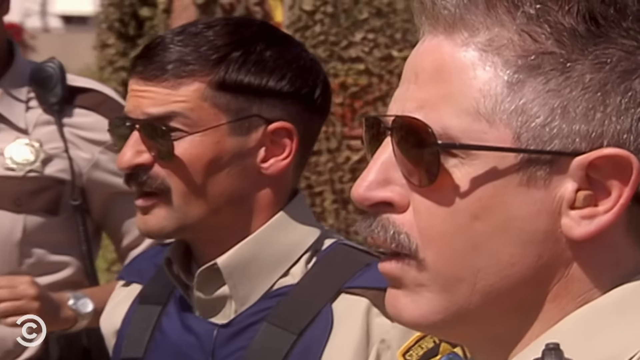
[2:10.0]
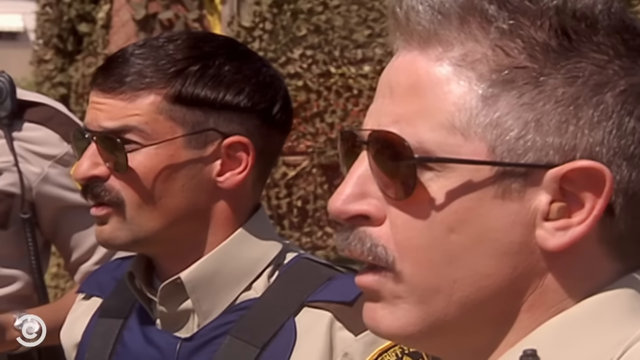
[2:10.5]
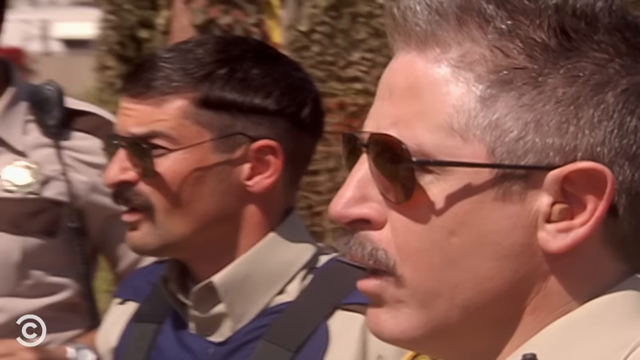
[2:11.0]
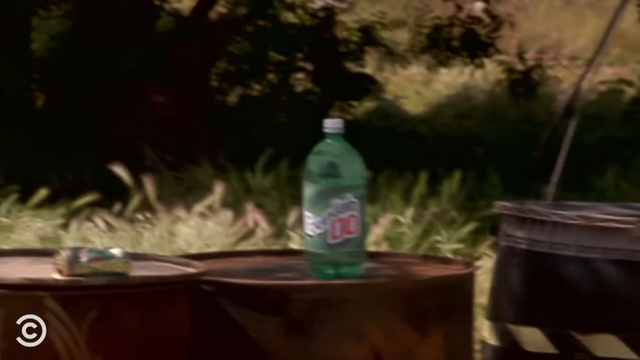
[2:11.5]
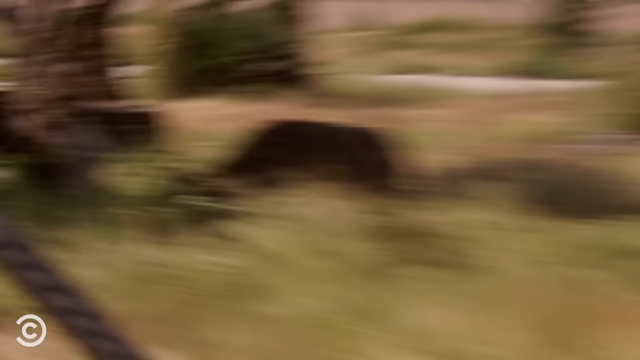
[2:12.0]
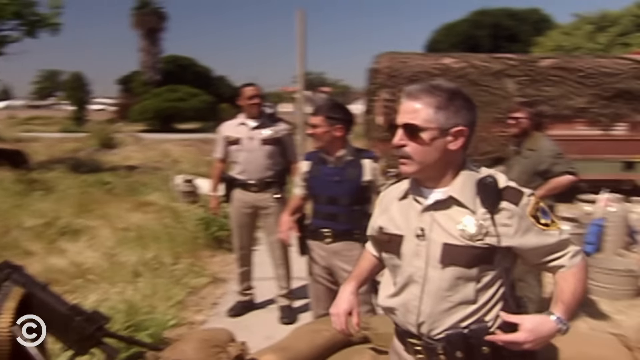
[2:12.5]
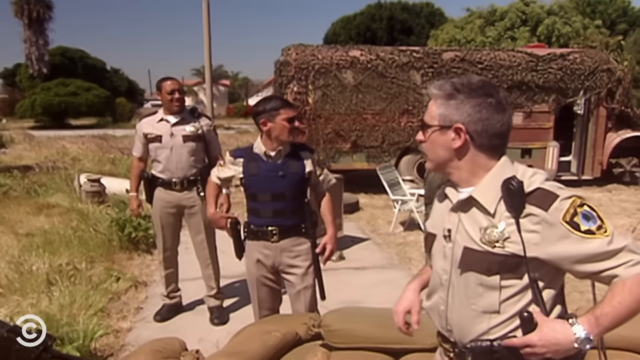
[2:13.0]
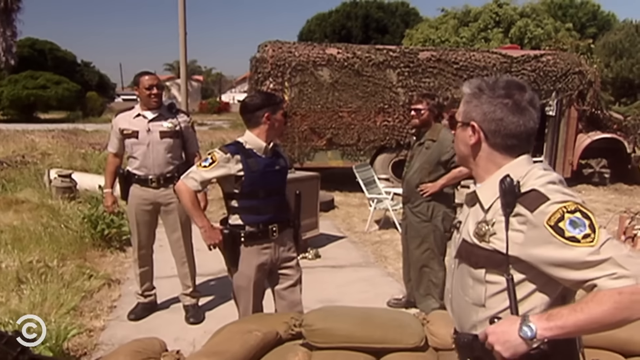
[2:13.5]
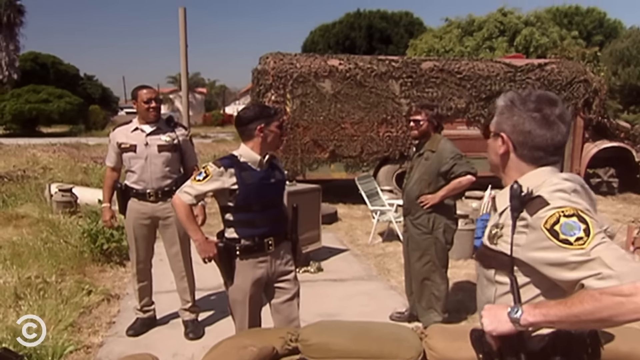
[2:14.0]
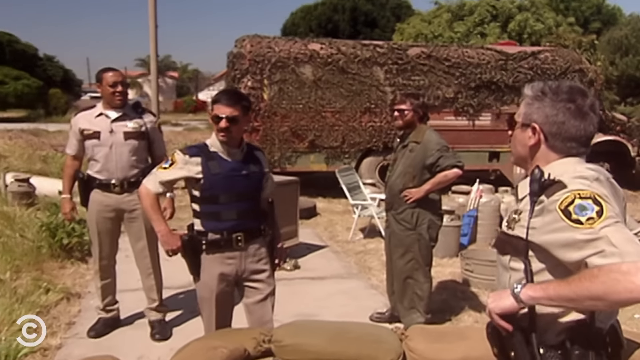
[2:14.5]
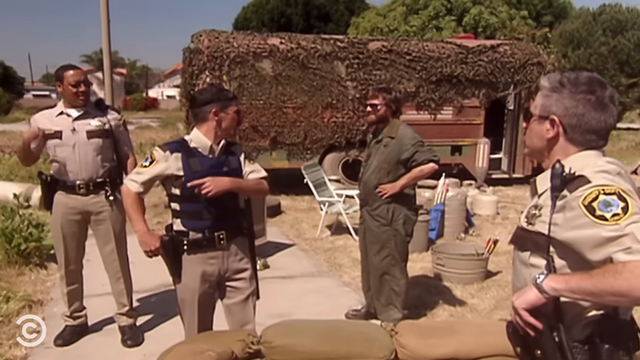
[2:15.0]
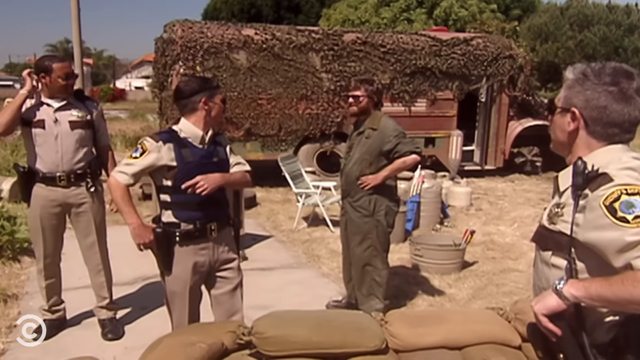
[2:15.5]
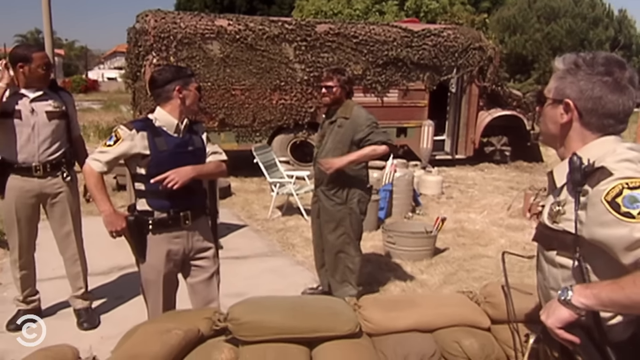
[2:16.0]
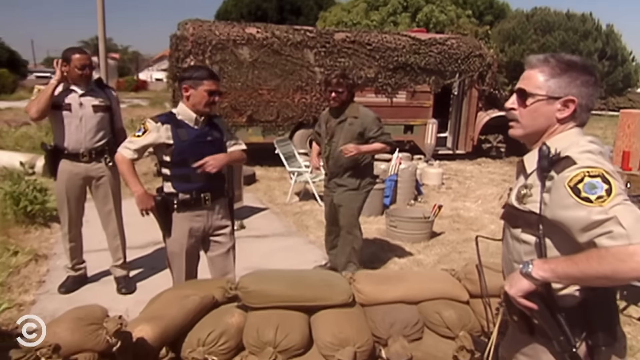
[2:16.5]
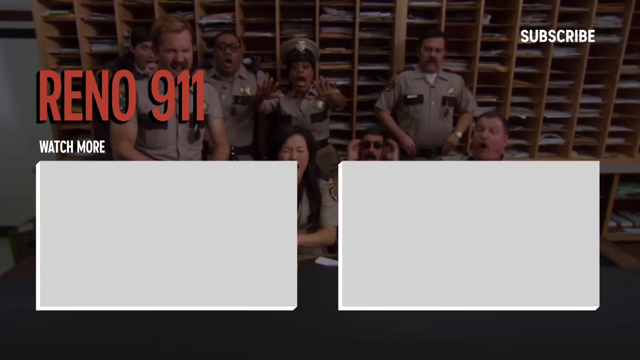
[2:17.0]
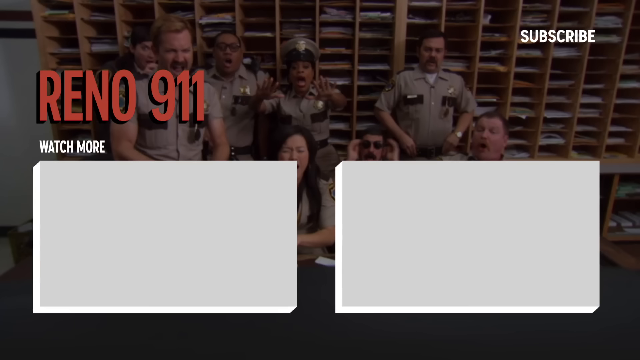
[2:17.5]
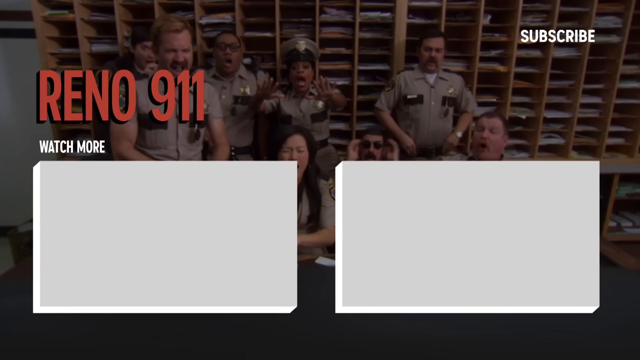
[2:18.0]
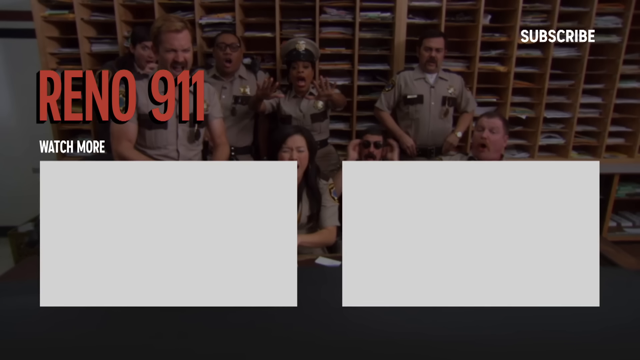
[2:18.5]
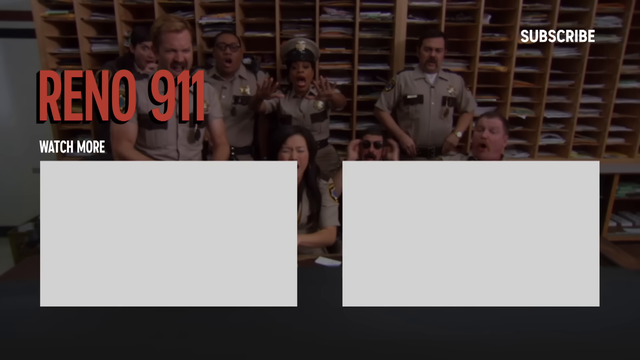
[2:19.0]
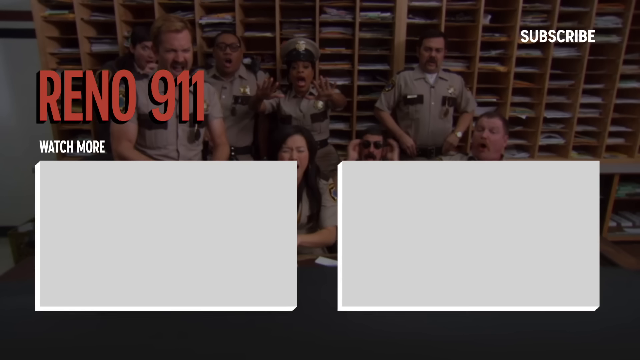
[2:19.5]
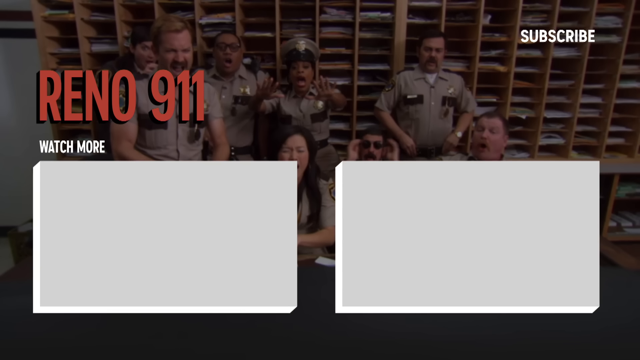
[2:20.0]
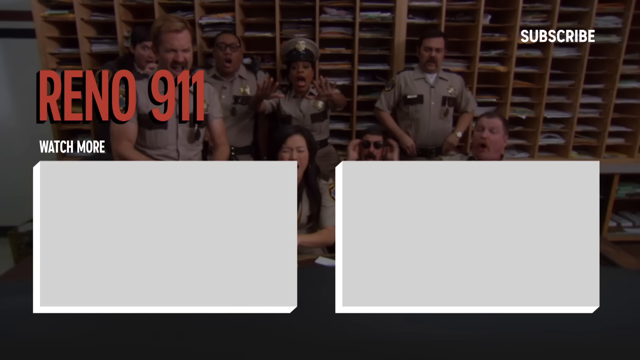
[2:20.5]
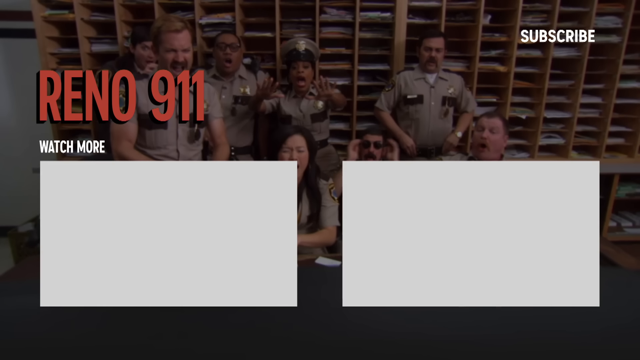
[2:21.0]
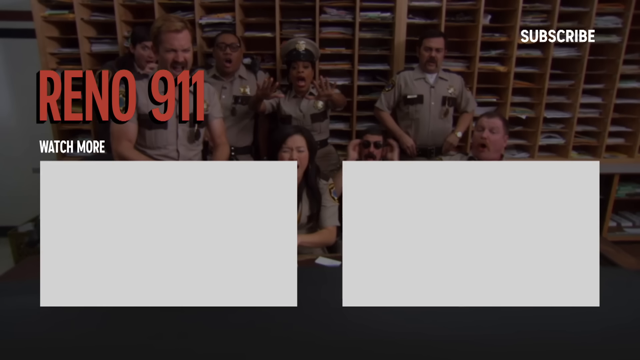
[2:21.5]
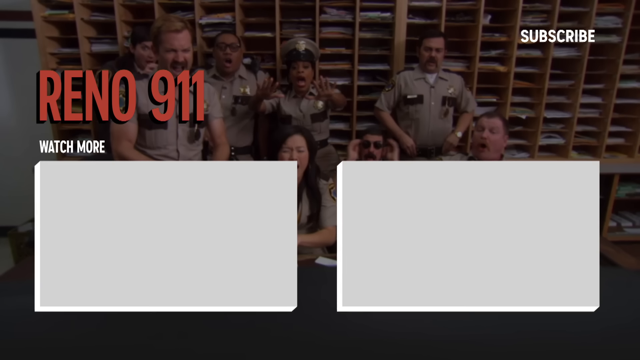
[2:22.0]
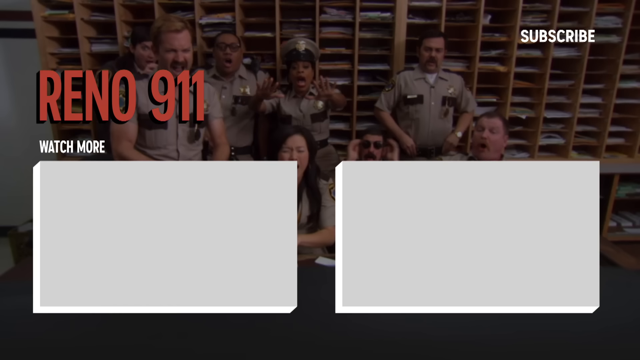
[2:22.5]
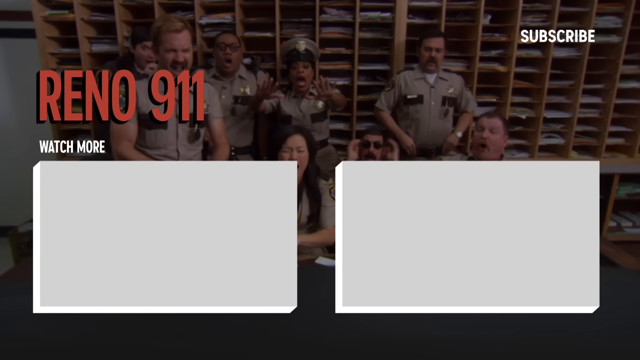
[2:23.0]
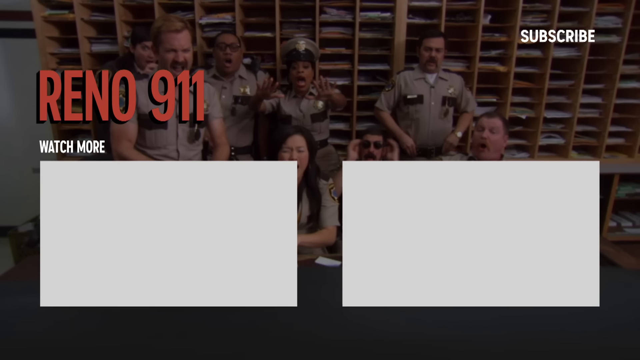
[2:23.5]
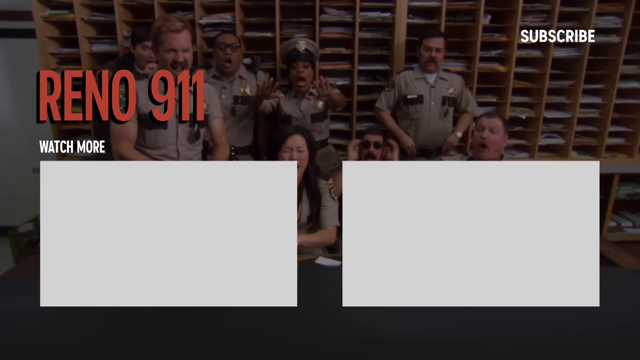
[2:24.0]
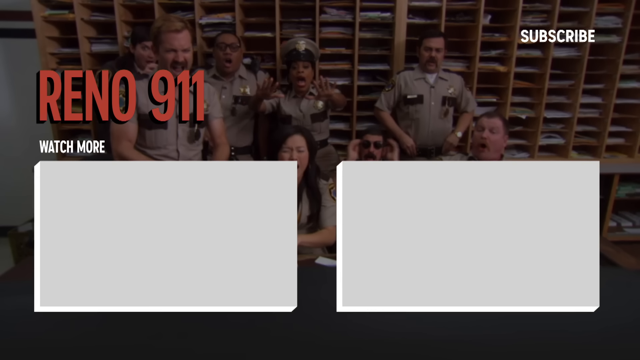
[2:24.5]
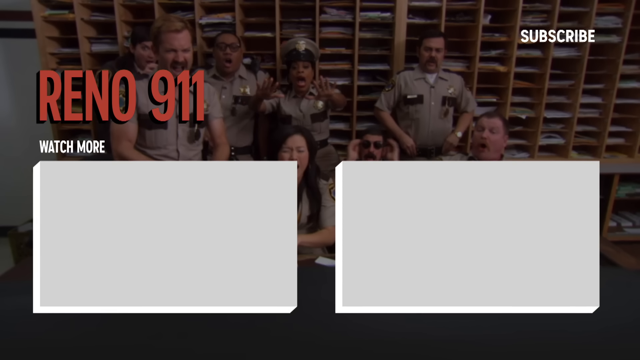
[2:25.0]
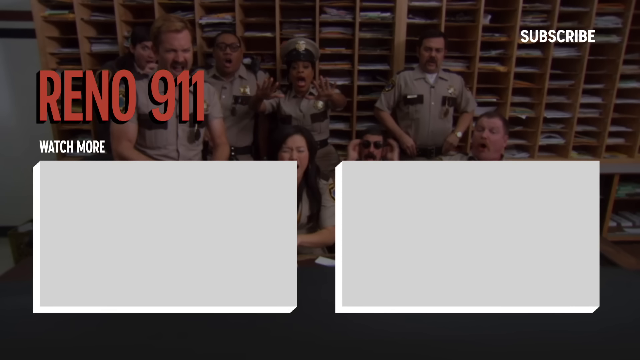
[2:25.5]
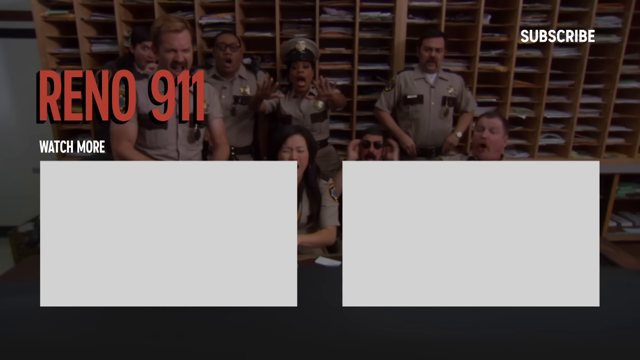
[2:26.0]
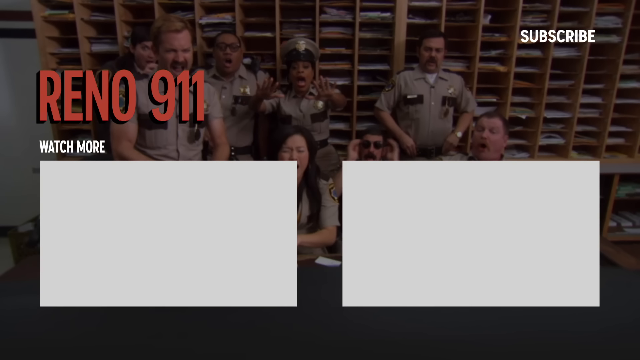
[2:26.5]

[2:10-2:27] The cops look back and forth between the guy in the jumpsuit and the explosion scene, which itself is not shown; the shot stays on the cops. One of them just stands there while two look back and forth; one points at the scene and then looks back at the guy. The guy in the jumpsuit does not move much, then gestures toward it and starts walking, as if maybe to have them walk toward the scene. It cuts to an end screen that says "Reno 911" with a picture of a bunch of cops, with something like filing behind them. There are two video suggestions to watch more and a subscribe to Comedy Central logo.